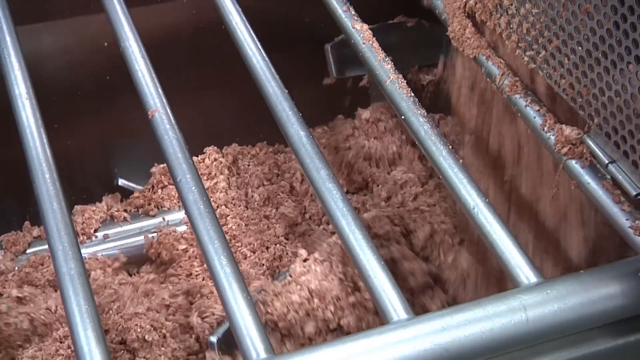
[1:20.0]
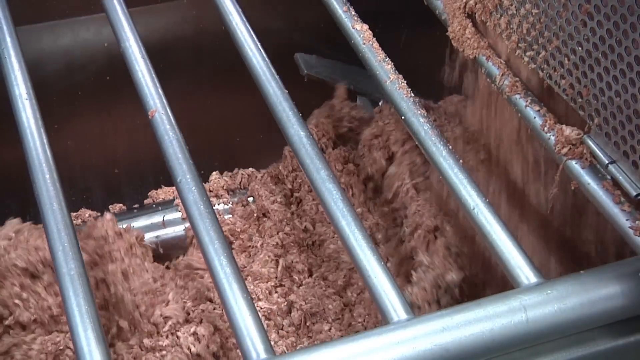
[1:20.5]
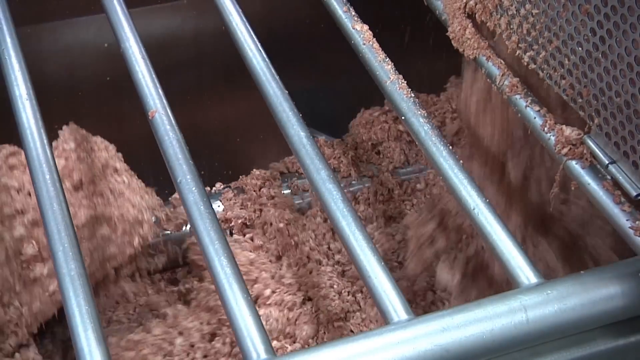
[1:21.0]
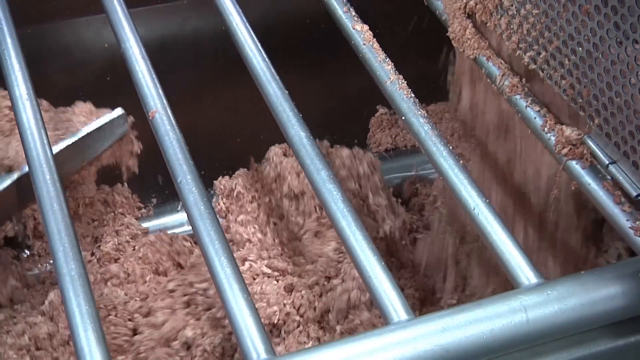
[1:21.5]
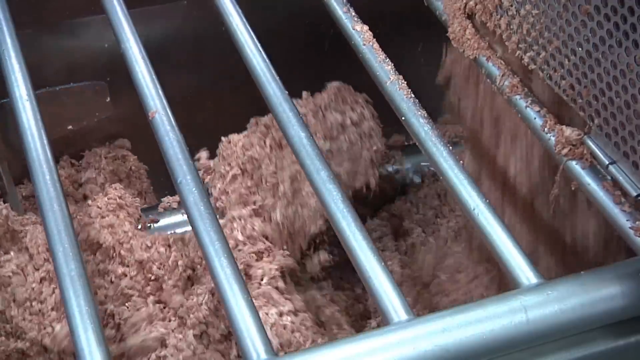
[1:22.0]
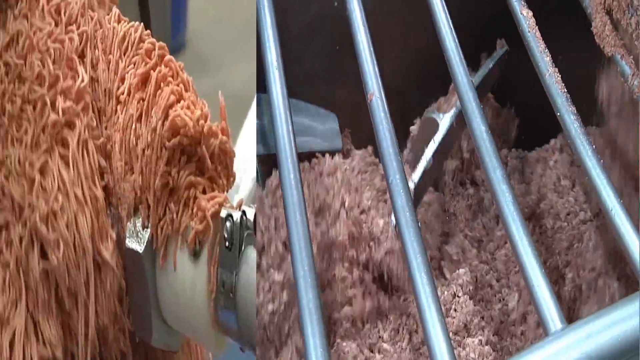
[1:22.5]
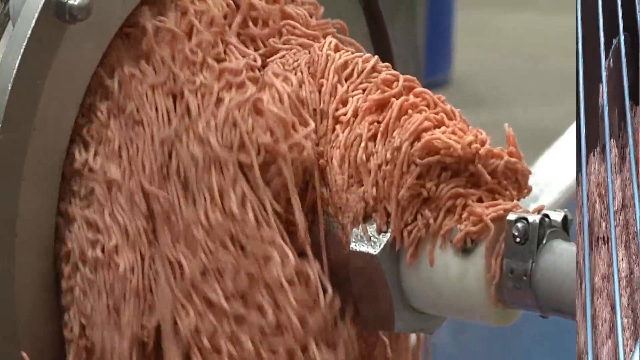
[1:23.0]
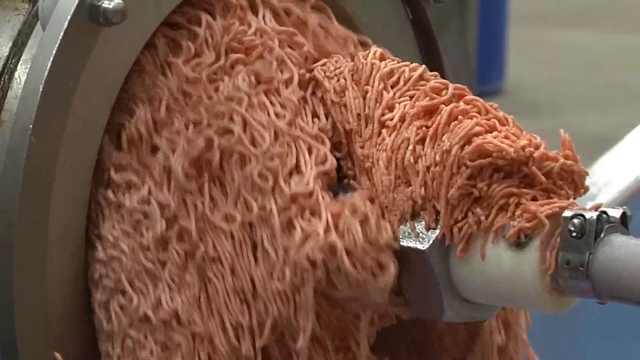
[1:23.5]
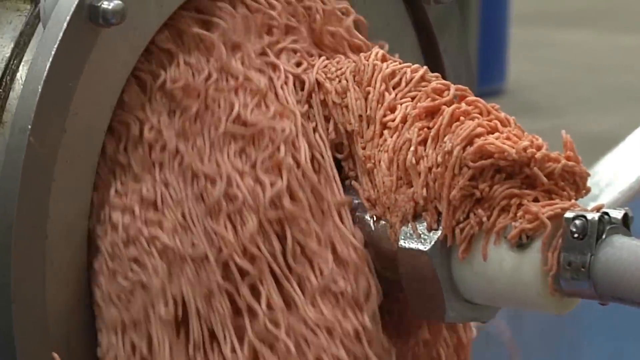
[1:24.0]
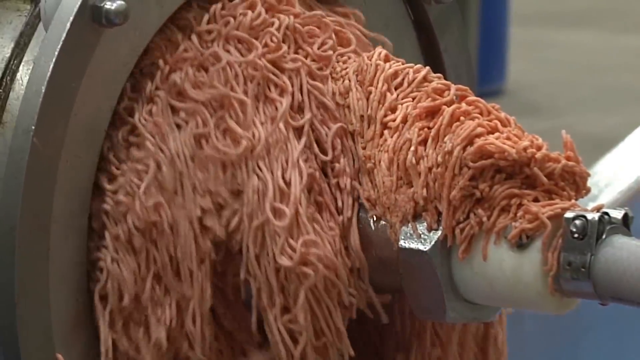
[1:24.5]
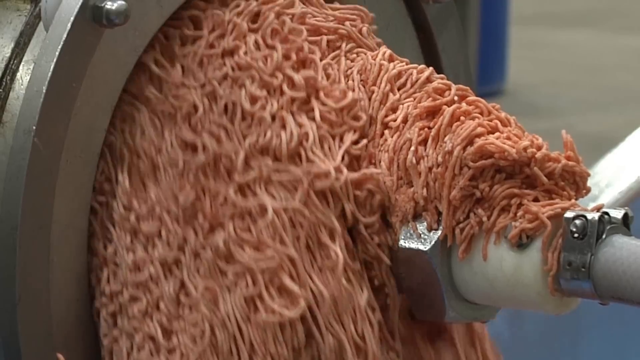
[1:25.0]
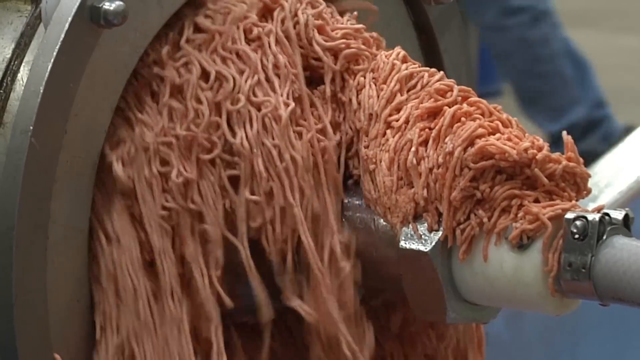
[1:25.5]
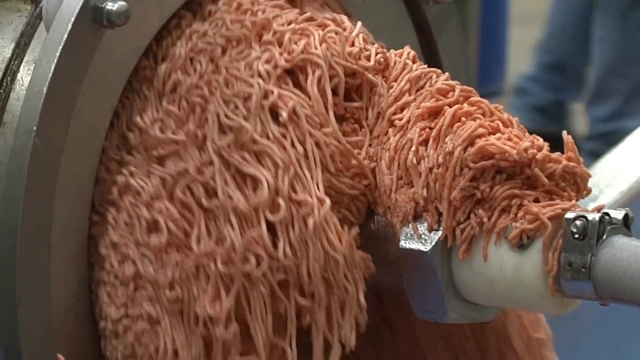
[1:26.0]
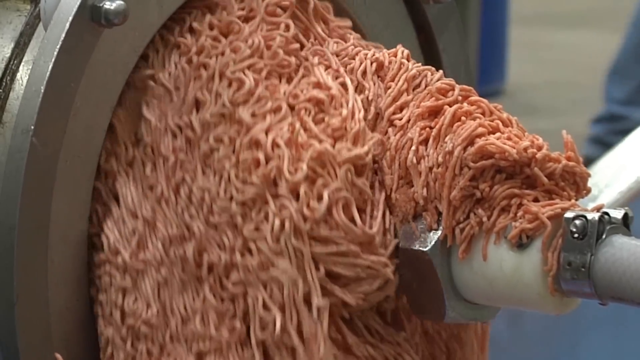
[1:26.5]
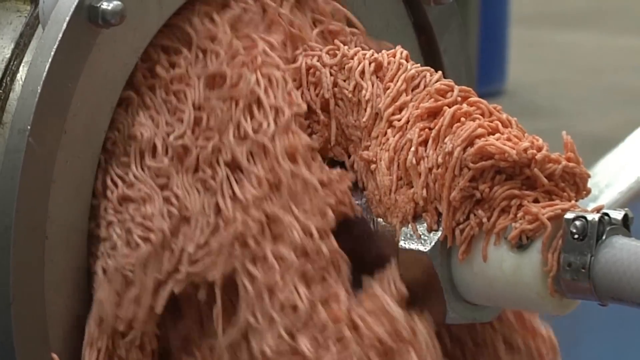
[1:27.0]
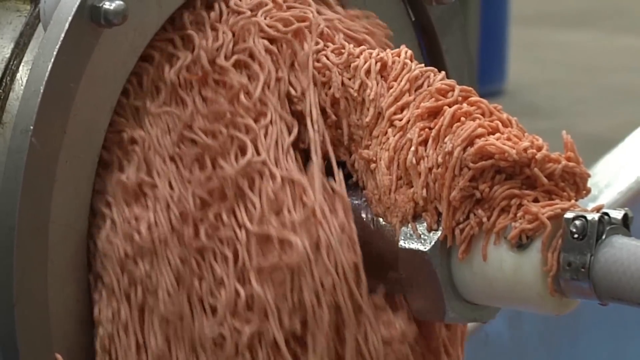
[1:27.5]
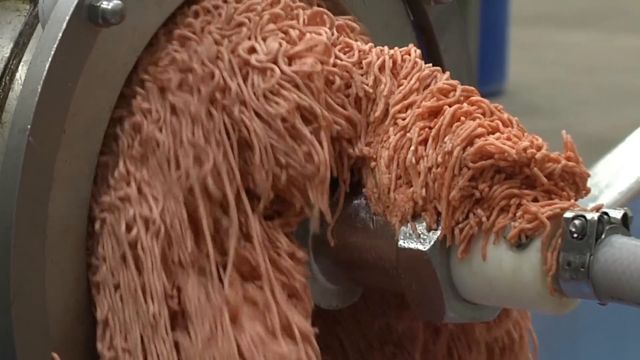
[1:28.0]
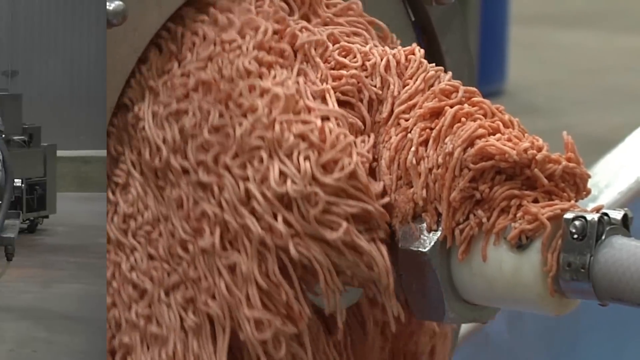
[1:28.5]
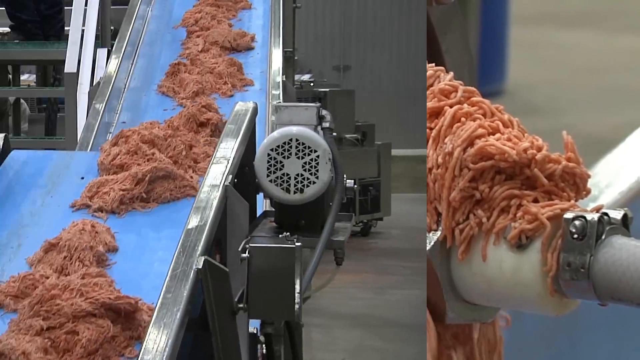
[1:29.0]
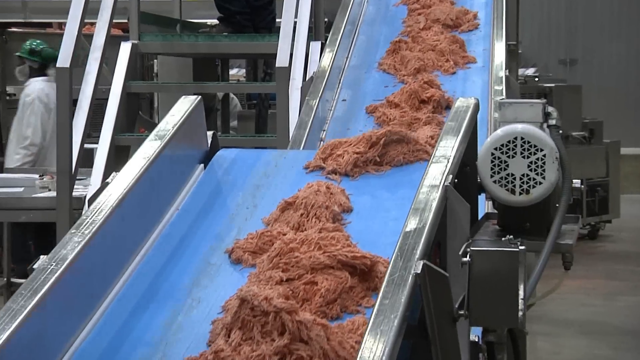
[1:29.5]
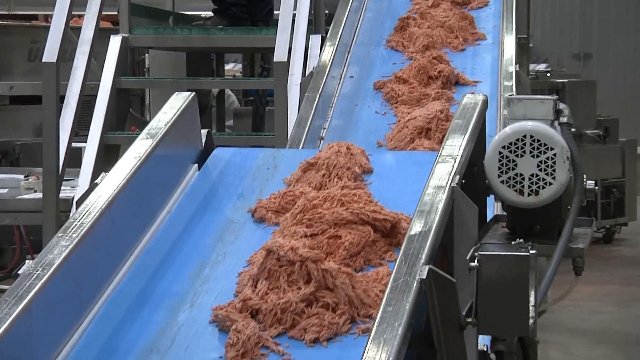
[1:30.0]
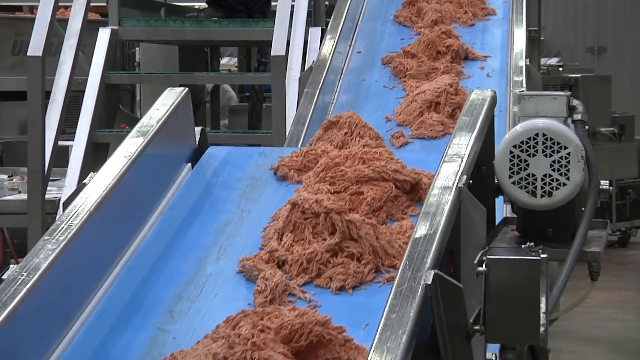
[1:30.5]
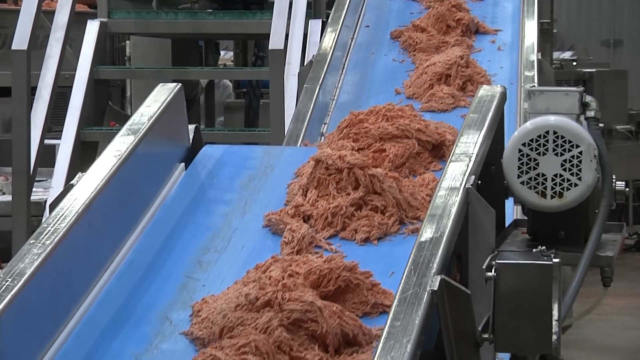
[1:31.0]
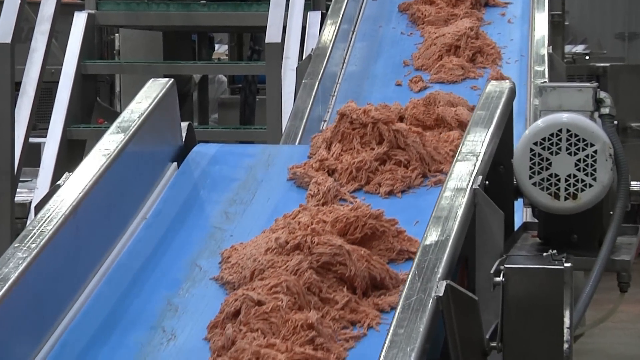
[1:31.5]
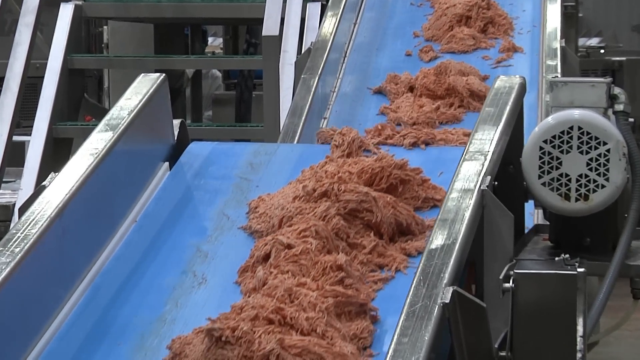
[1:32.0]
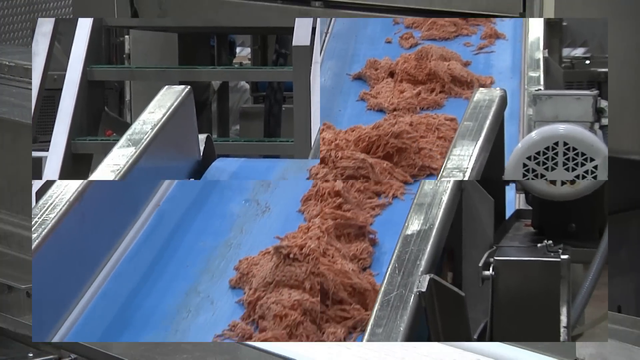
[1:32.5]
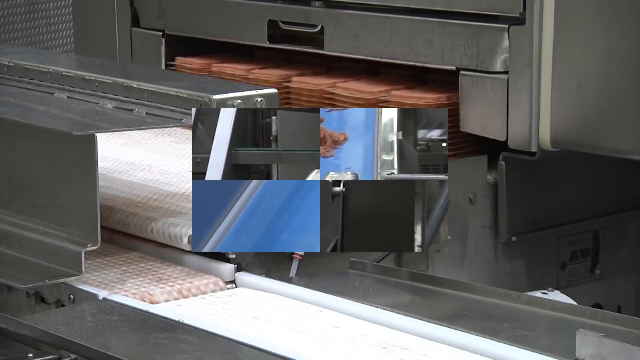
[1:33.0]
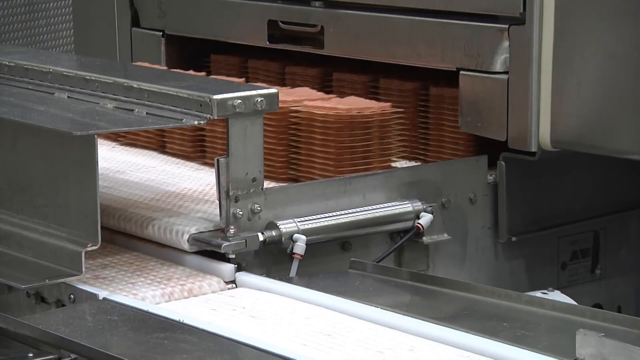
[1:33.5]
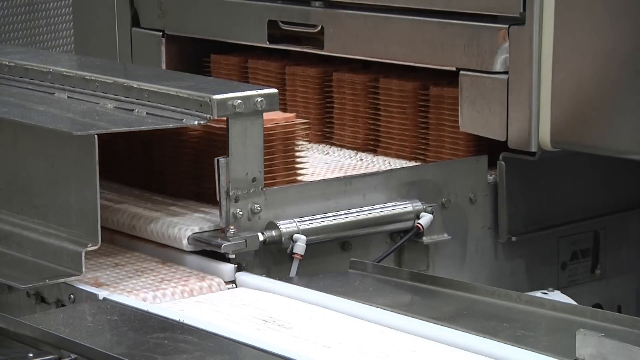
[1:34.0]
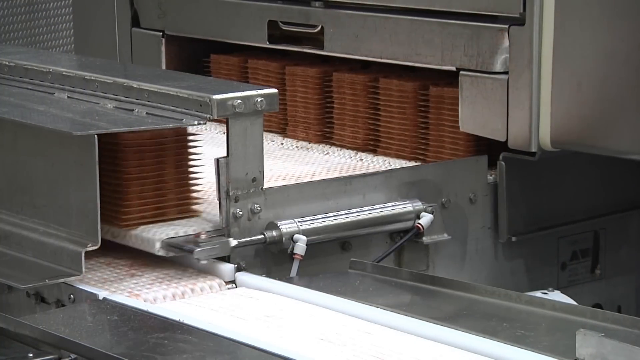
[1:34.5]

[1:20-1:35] The meat, further along in its processing, is dumped into what seems to be another vat. Some moisture seems to be added, and it is possibly pressed through to get a very fine spaghetti shape; possibly some color is added as well. It goes down the line to another section, where it is pressed into squares and possibly frozen. The setting is still the factory floor, with somebody passing behind and workers all around.